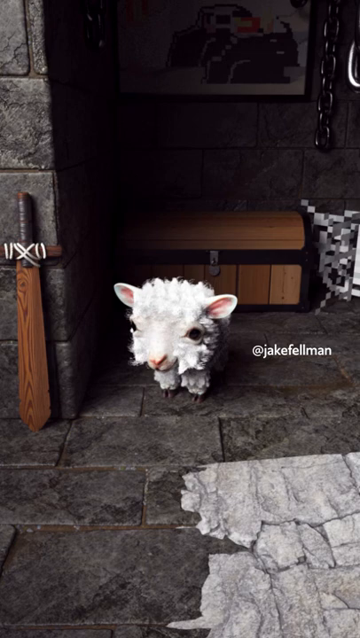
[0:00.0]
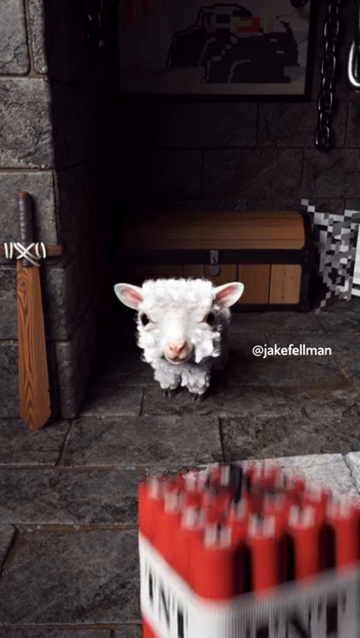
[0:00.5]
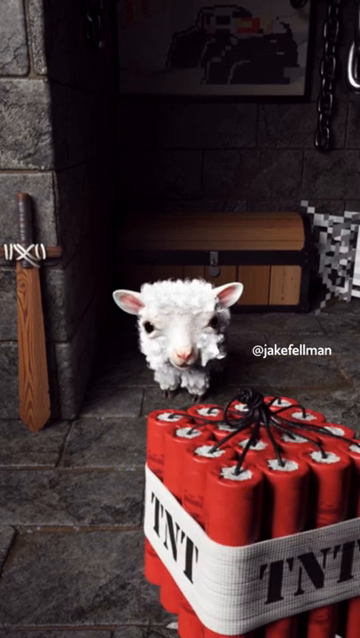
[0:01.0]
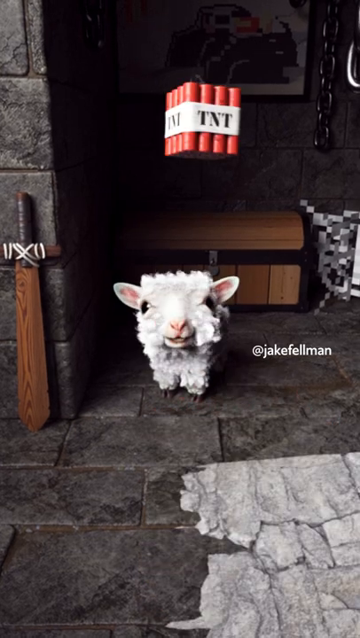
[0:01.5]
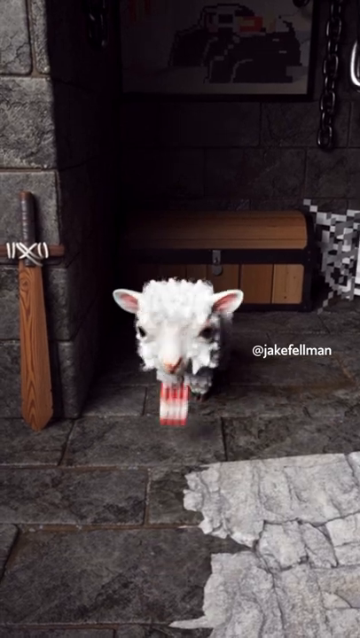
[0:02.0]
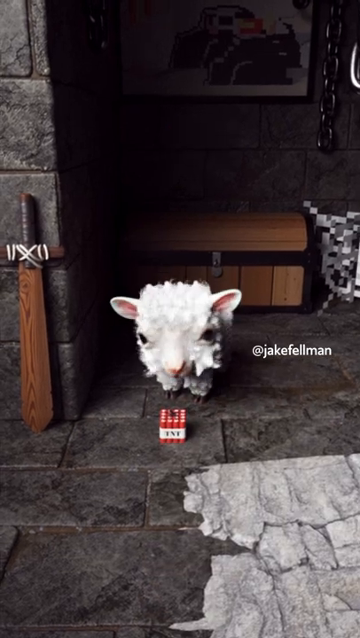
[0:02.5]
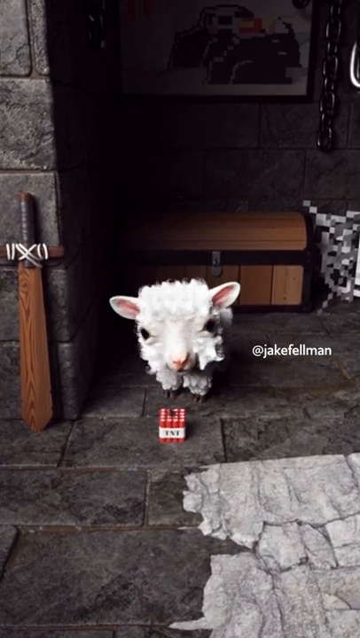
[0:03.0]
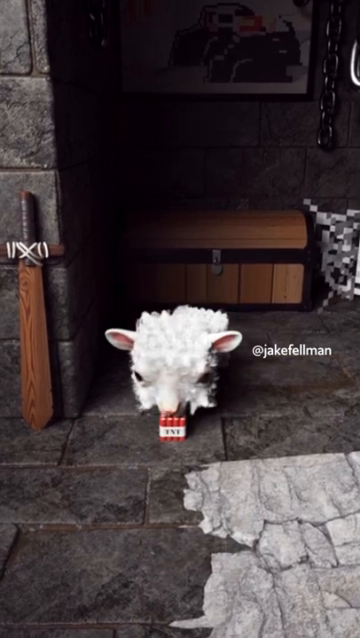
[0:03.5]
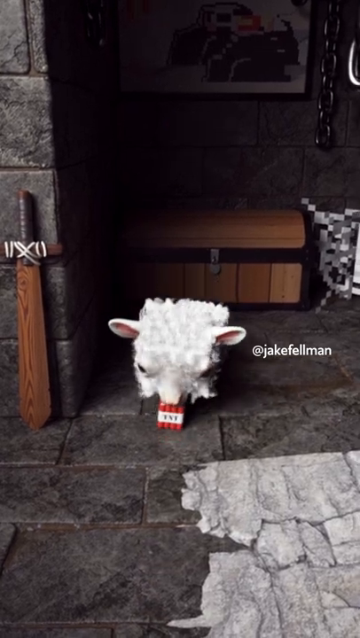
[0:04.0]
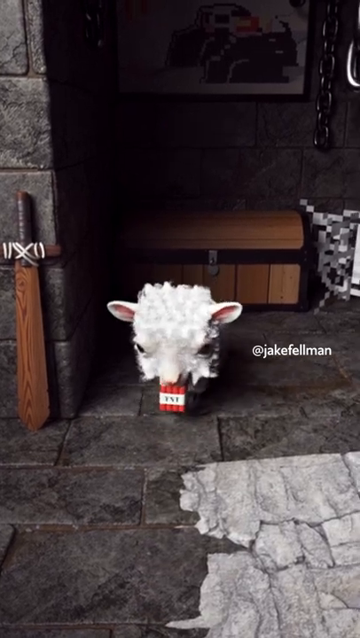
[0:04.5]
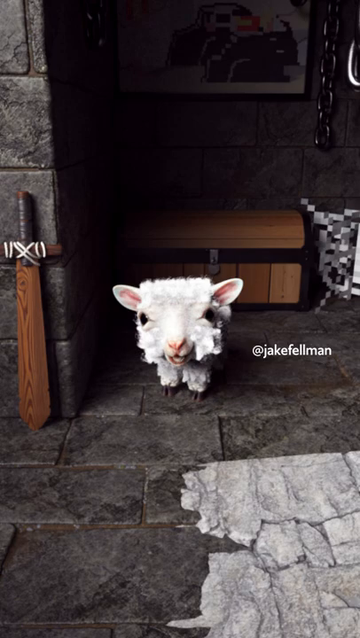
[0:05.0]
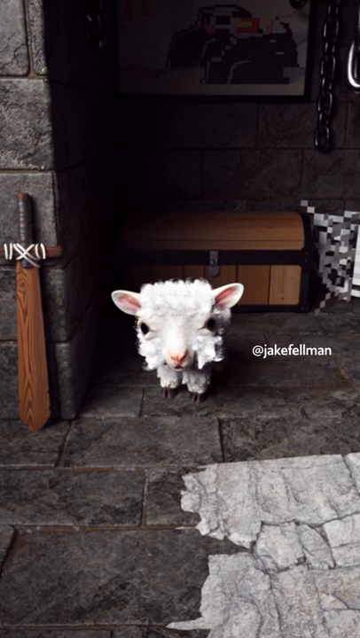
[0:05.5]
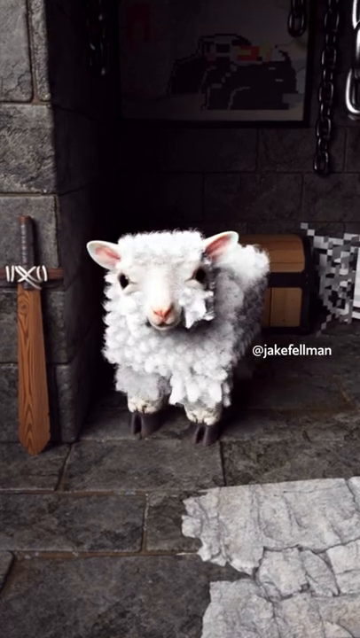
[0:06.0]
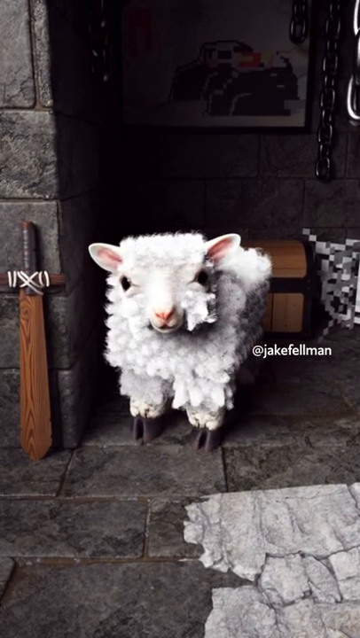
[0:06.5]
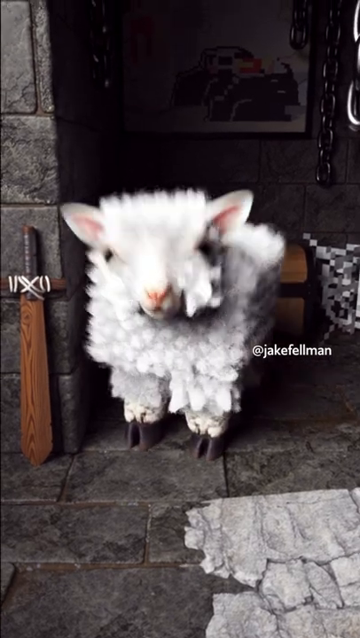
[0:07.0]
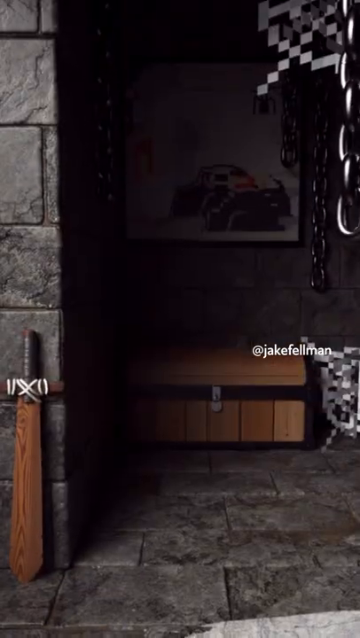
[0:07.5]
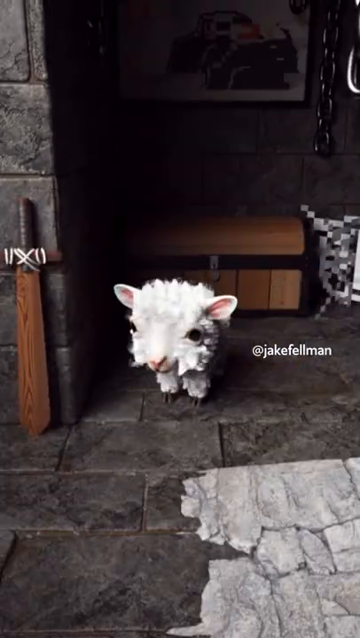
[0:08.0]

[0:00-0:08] The video appears to be a recording of gameplay on a mobile device, apparently of a Minecraft game. Someone has TNT; the hand of the person throwing it is not visible. The TNT just kind of appears close up and then kind of gets launched toward what looks like a sheep or some other type of farm animal, landing right at its feet and mouth area. The sheep kind of bends over and eats the TNT up. Momentarily it grows larger, then it expands and kind of explodes, but in a very cartoonish manner; it is not a violent scene at all and is more of a comedy. It is not really an explosion at the end; rather, the sheep kind of splits into two separate sheep.